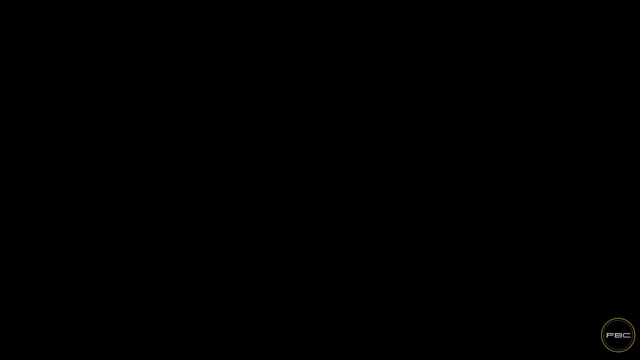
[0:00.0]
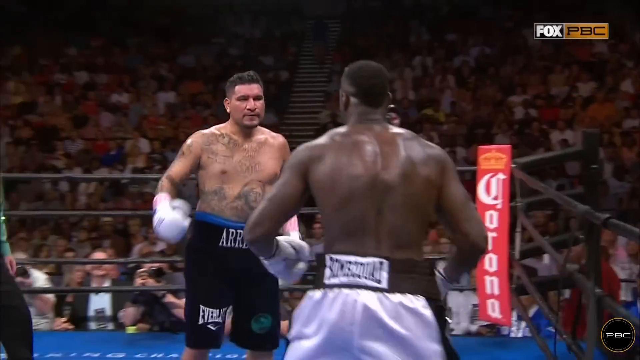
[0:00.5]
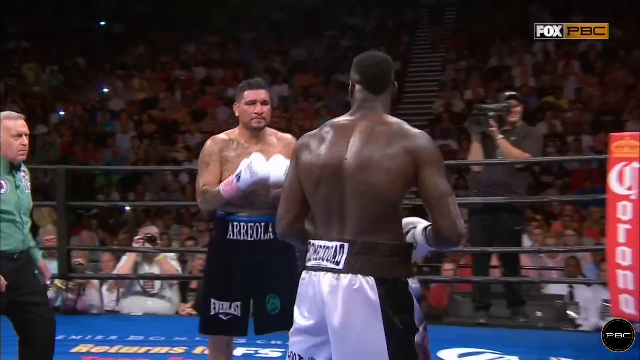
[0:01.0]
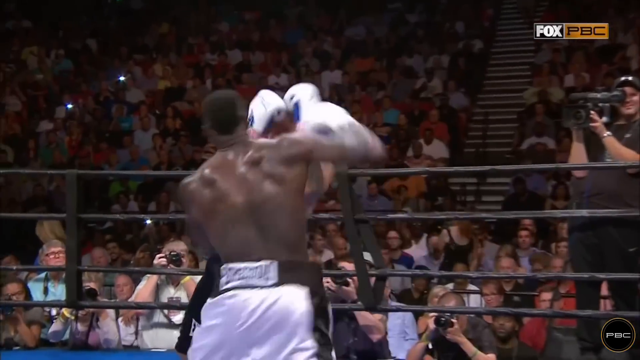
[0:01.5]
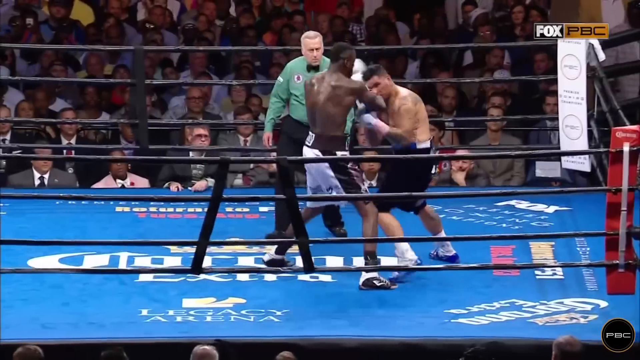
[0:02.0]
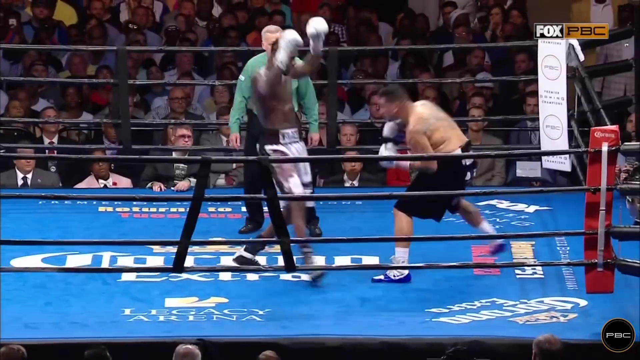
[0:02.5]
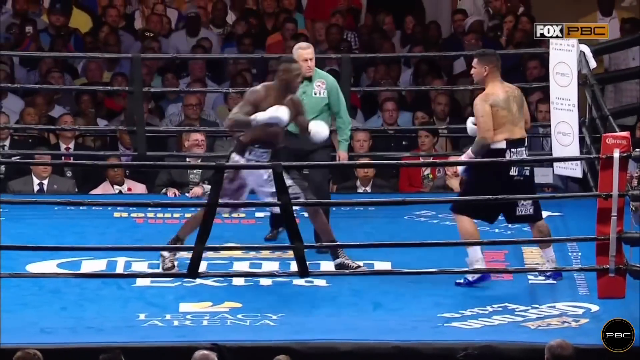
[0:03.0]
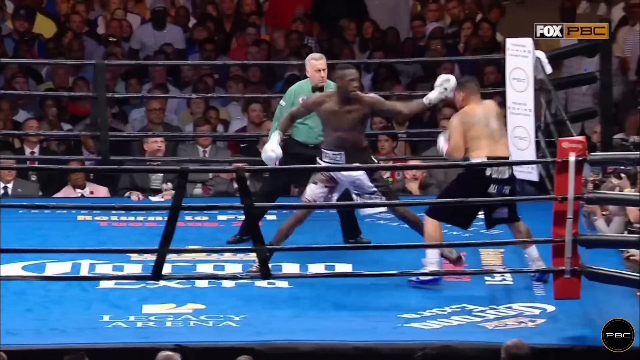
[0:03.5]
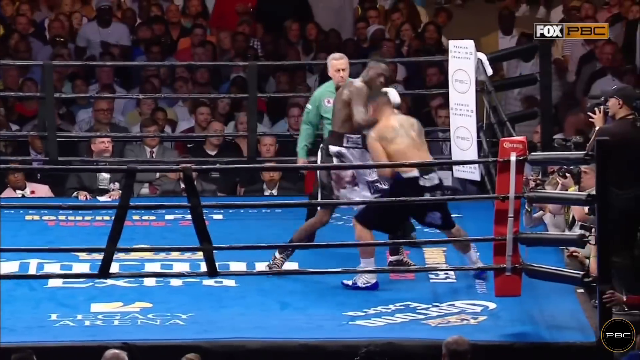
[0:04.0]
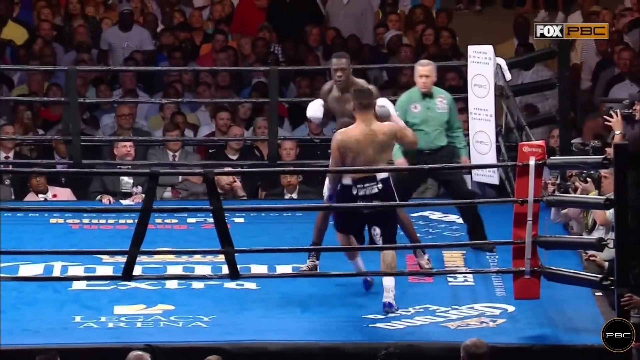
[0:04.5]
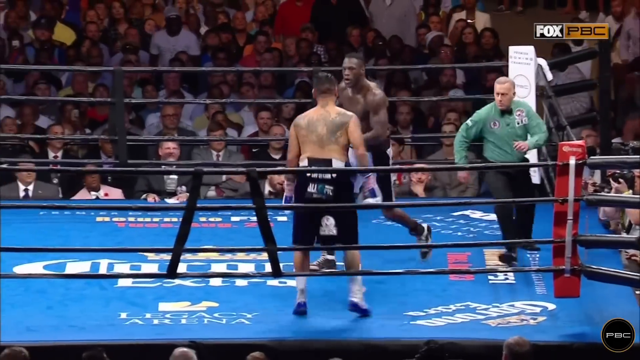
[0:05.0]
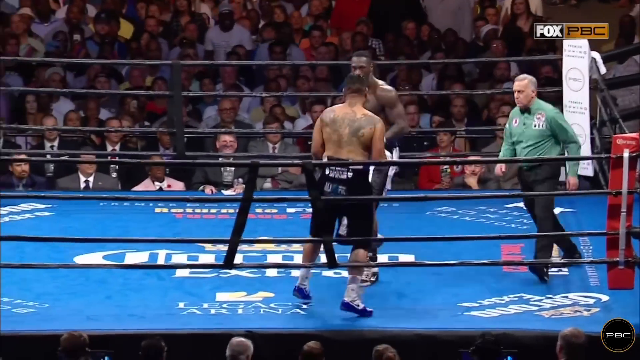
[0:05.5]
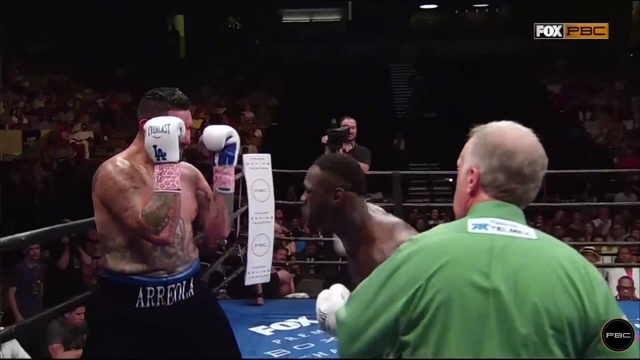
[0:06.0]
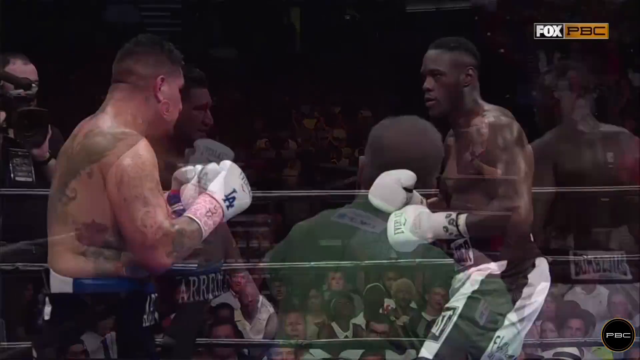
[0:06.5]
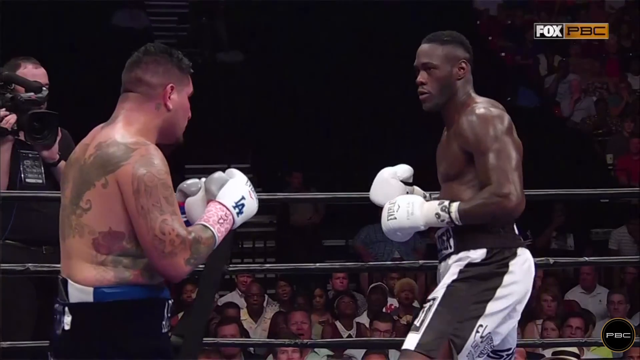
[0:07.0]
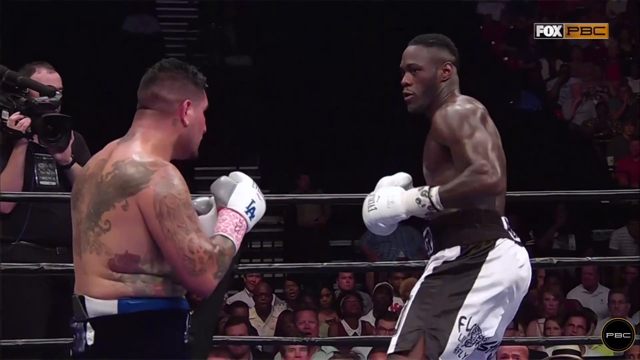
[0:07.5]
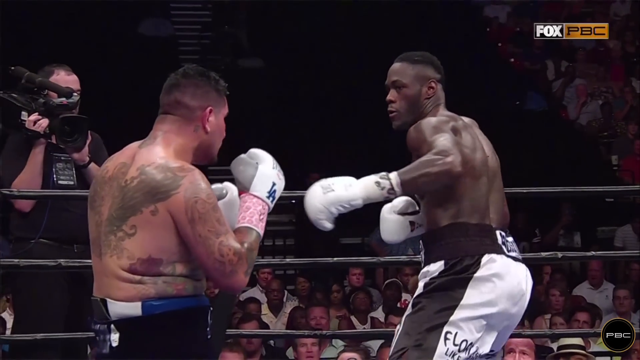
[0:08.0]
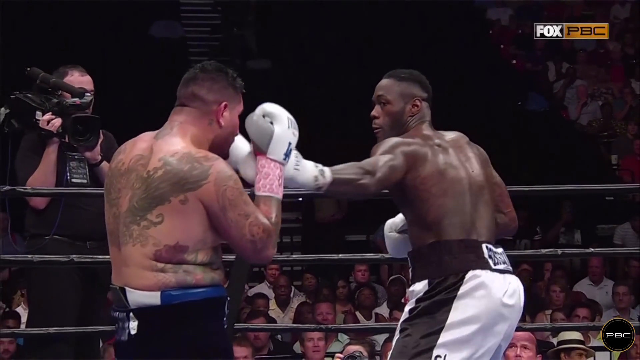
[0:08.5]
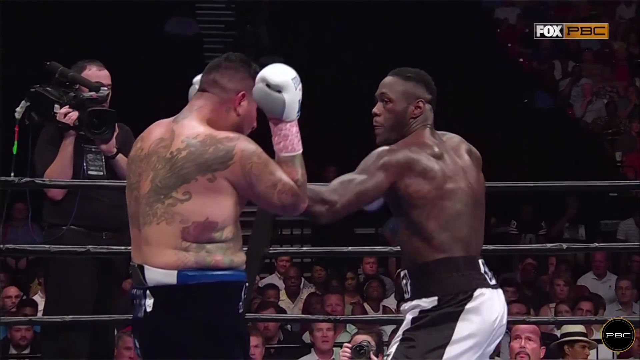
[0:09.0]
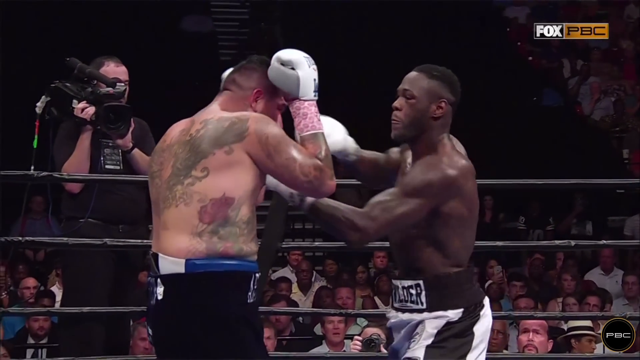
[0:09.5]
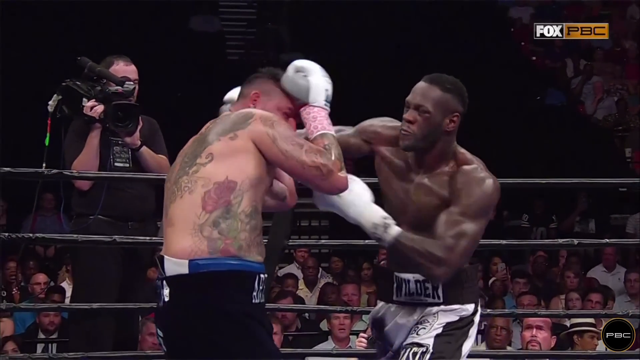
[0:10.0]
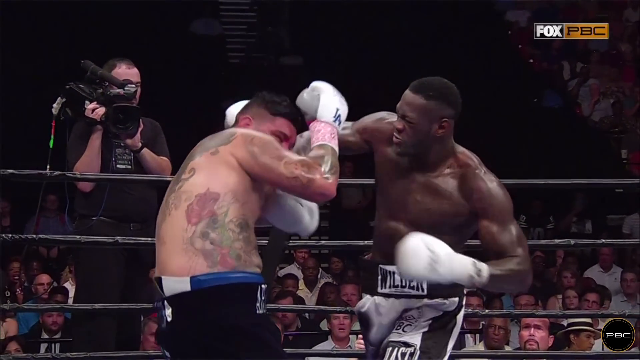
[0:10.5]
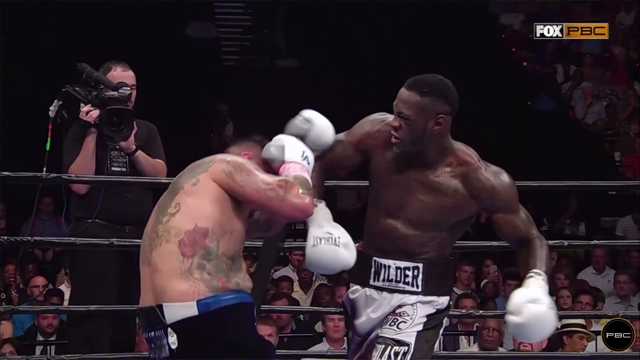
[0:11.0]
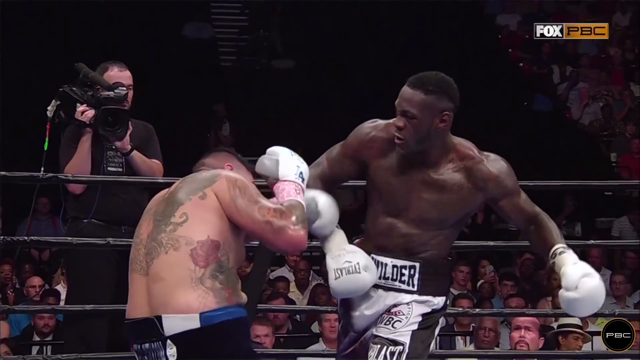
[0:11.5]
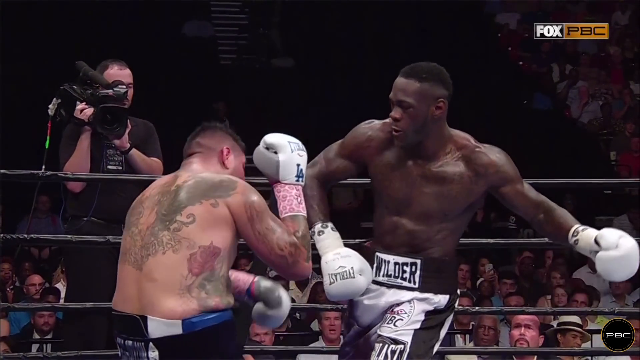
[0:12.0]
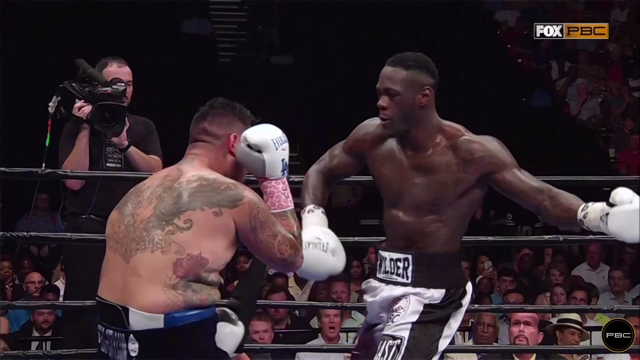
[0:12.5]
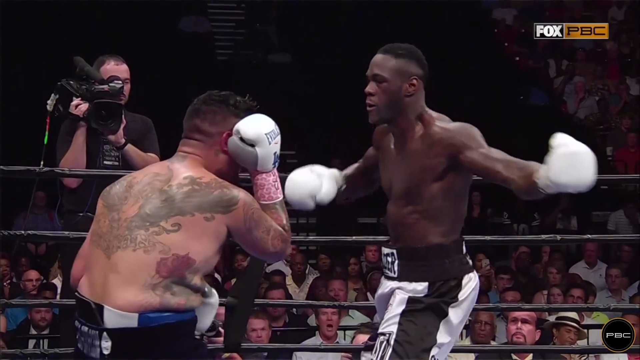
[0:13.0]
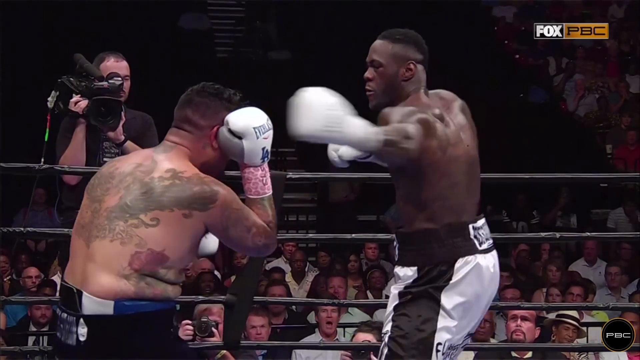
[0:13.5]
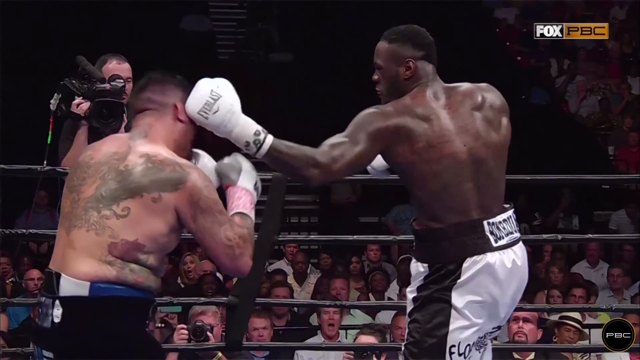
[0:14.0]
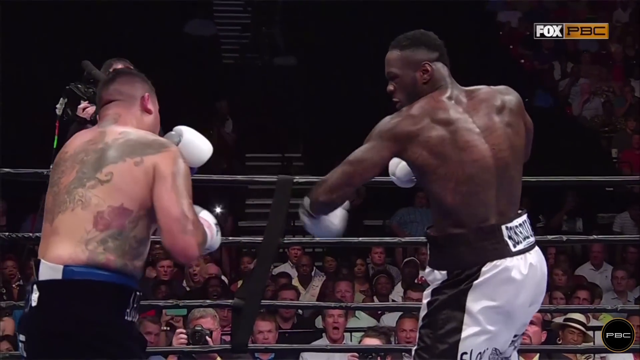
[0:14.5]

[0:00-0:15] Two boxers are inside a boxing ring. One boxer, of African descent, wears white boxing shorts with a black sash around his waist bearing the word "Wilder" in black against a white background, and white boxing gloves. The other boxer has tattoos all over his back and torso and wears black boxing shorts; he seems to be taking the punches from the other boxer. A referee in a green long-sleeve shirt and a black bow tie steps around the two boxers to avoid being in the way. The ring has a blue platform, and a cameraman in a short-sleeve black t-shirt holds a camera on his right shoulder, filming the proceedings.